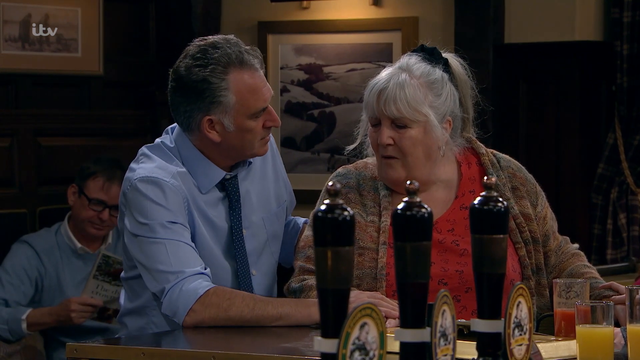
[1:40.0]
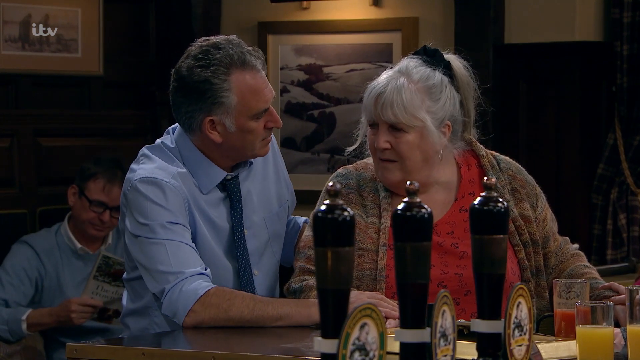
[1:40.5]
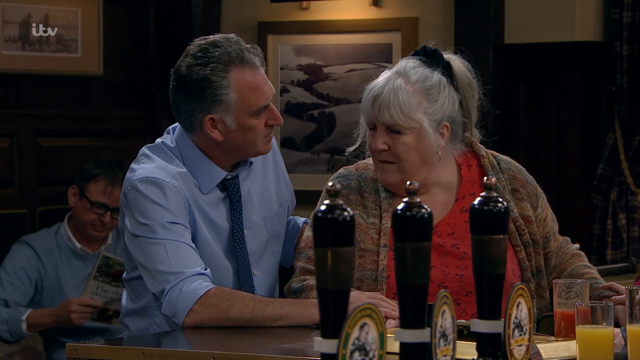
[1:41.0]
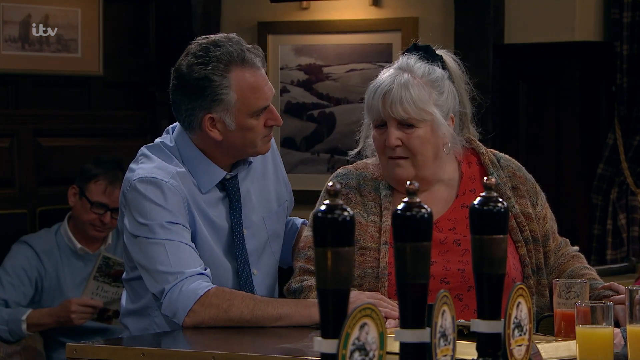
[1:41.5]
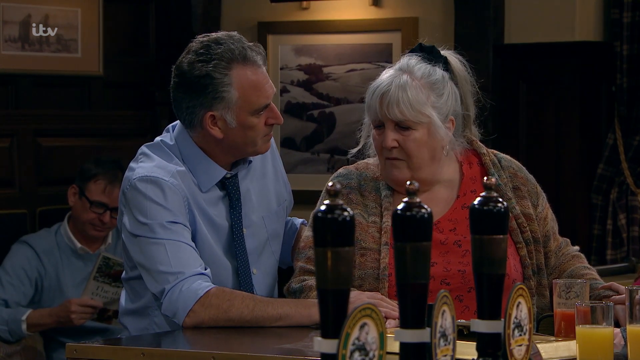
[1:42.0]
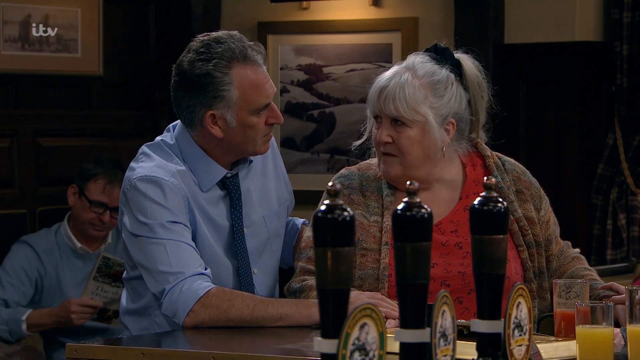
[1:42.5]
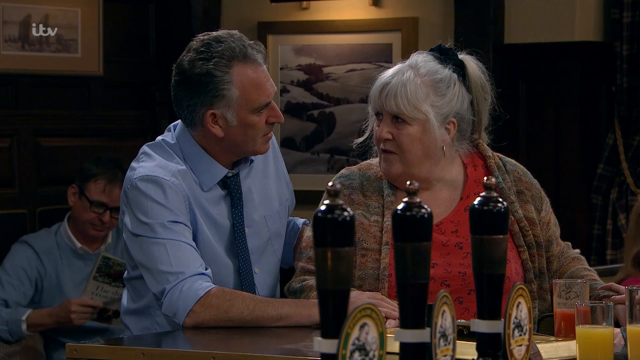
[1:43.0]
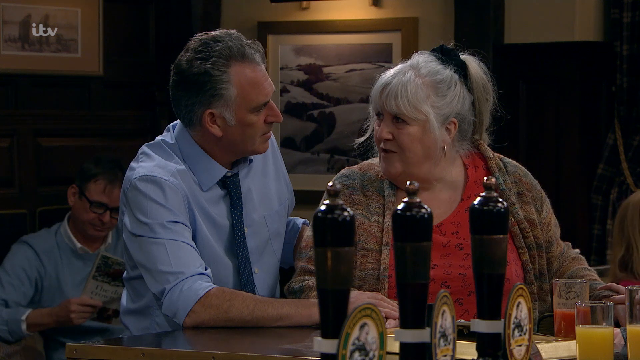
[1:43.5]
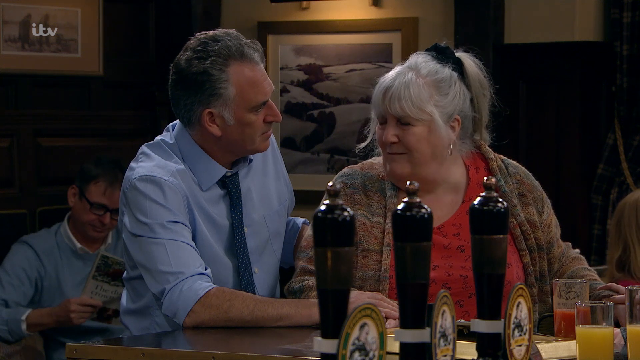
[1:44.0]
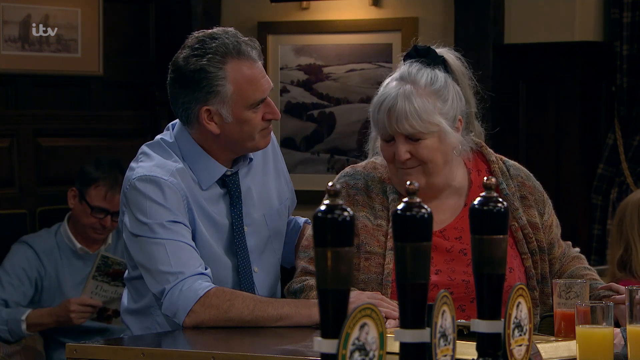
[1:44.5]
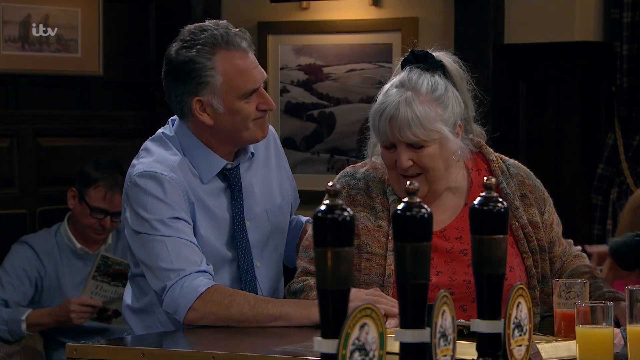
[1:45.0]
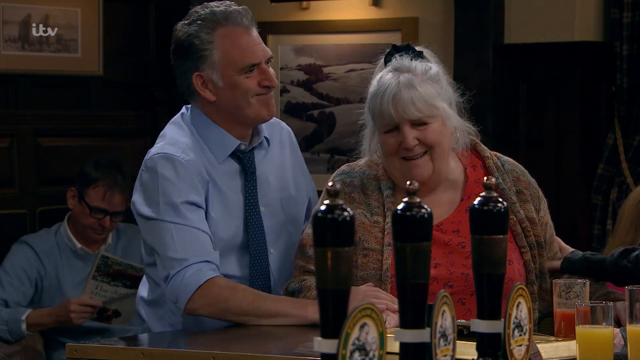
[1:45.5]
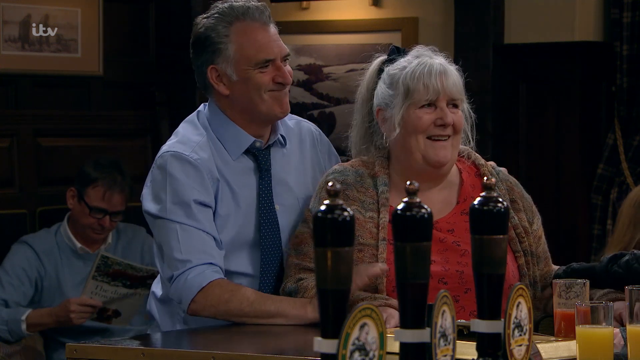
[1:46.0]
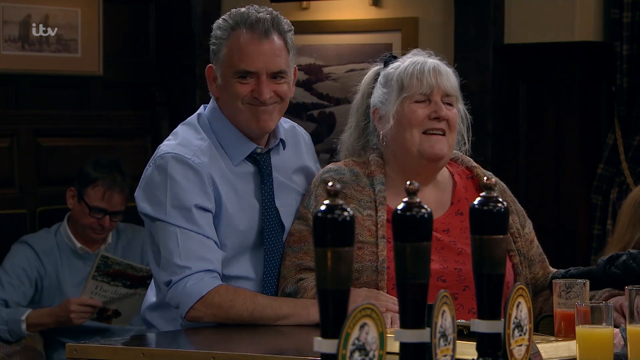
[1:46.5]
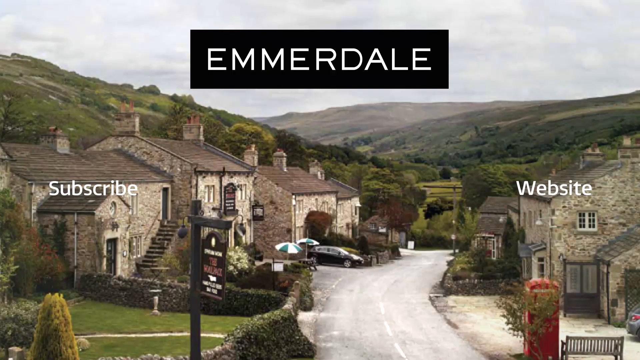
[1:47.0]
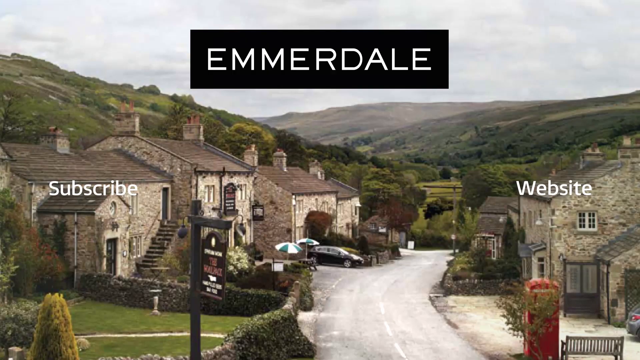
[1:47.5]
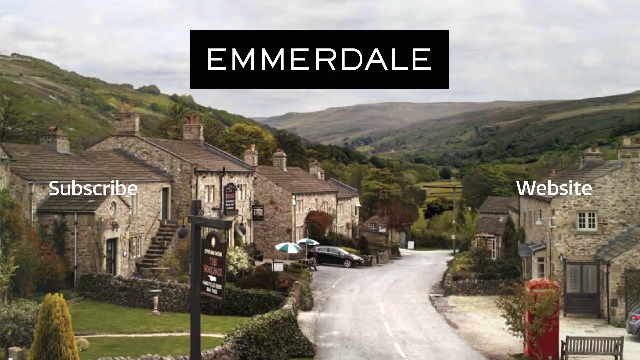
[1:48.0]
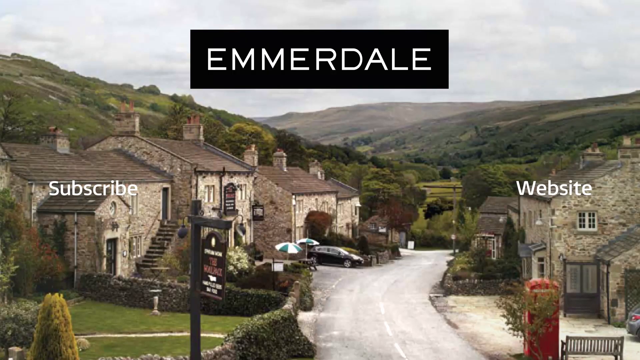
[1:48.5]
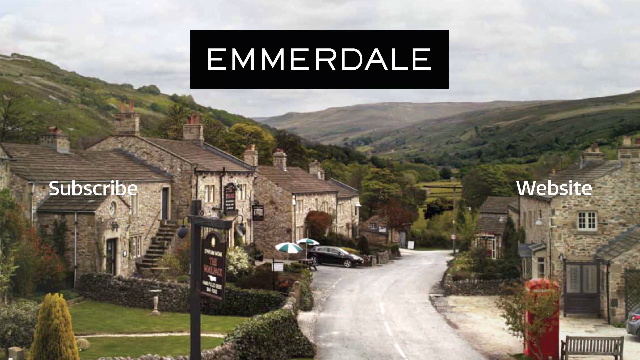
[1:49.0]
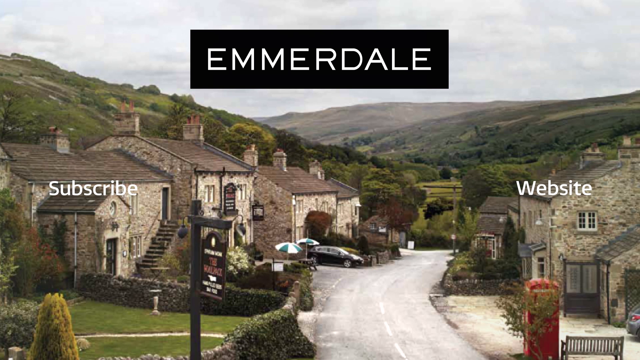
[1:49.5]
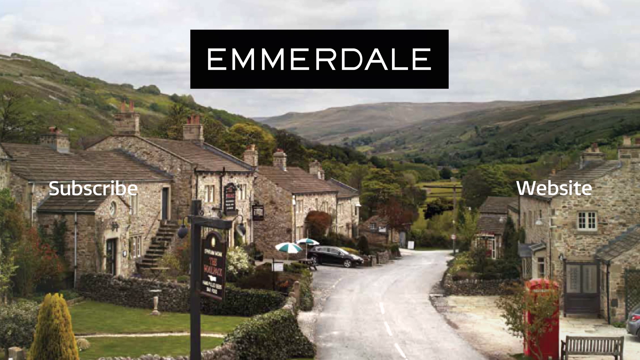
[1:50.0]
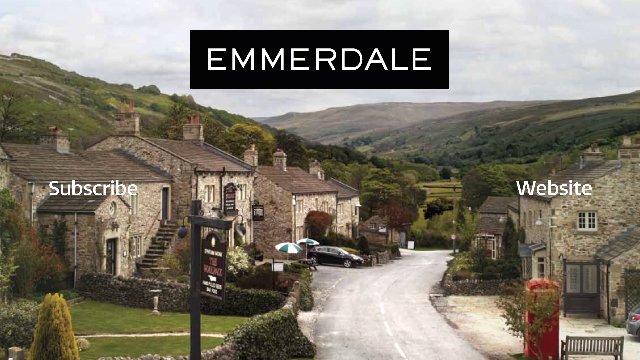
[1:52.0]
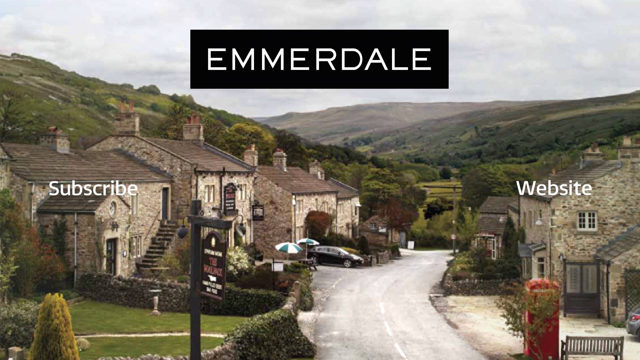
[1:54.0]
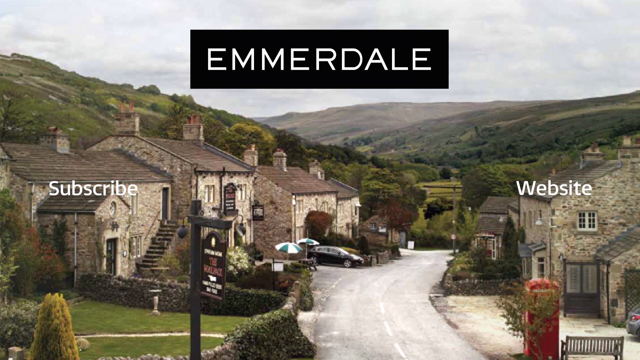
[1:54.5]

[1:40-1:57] The barkeep and the older woman are talking; she is sitting down with about three taps in front of her. A man in glasses behind them is reading something. The two have a little laugh. There is also a view of what seems to be a town, an idyllic village with stone wall buildings, a road, and a lot of greenery, out among the mountains and hills; there appears to be a red telephone booth, a bench, and some sort of sign. The video then possibly cuts away to "subscribe Emmerdale, watch the full episode now" as it ends.